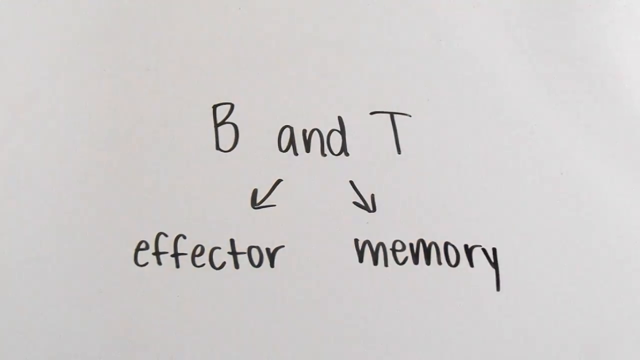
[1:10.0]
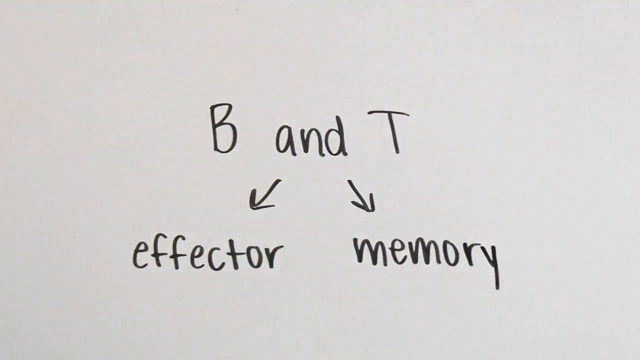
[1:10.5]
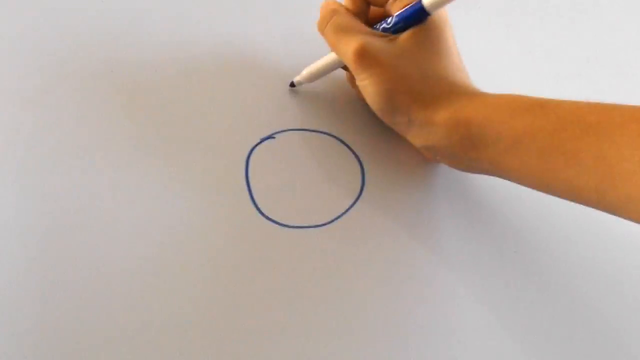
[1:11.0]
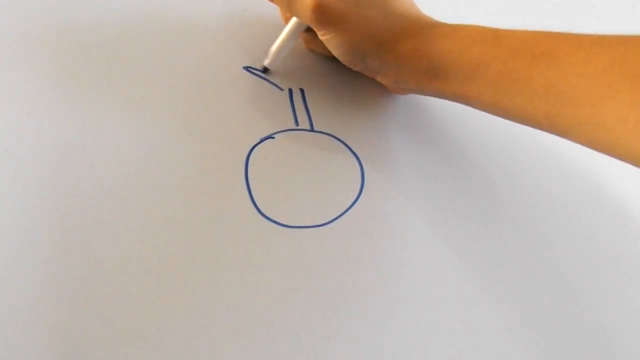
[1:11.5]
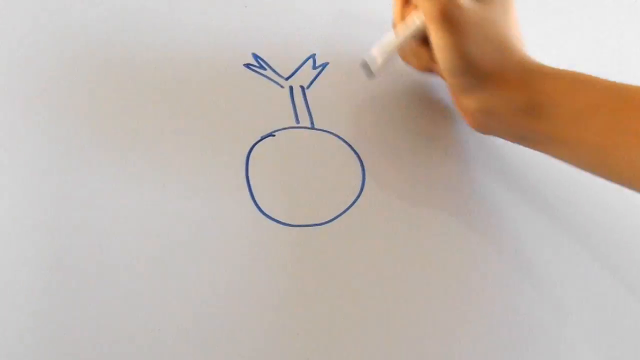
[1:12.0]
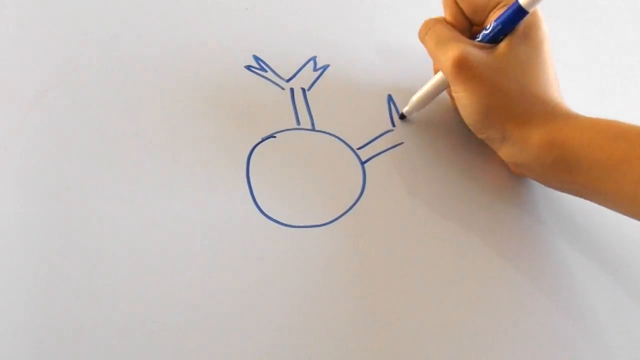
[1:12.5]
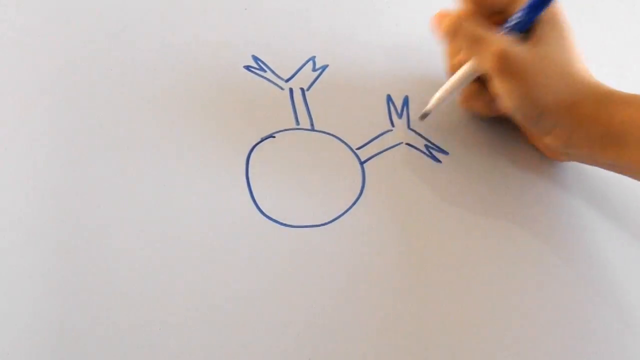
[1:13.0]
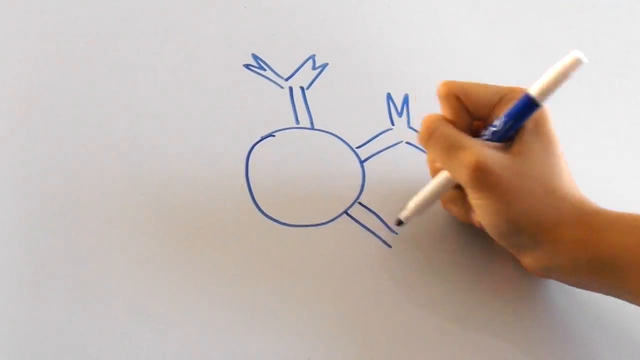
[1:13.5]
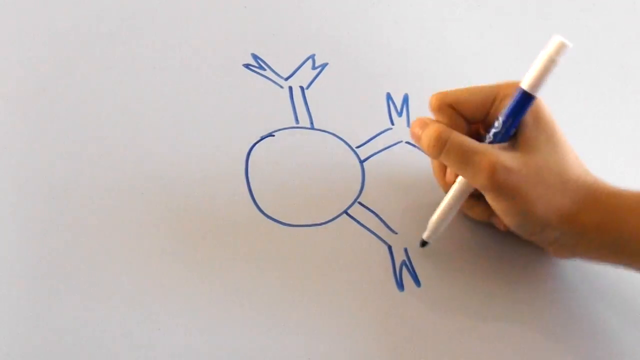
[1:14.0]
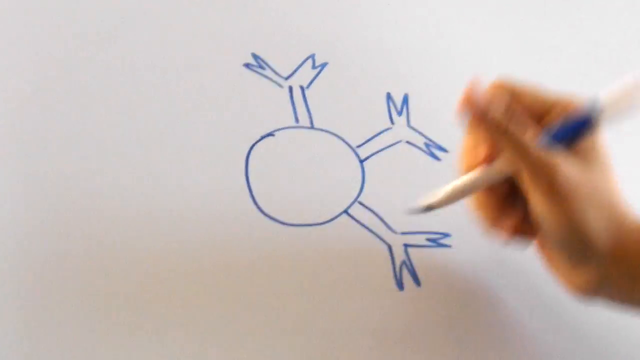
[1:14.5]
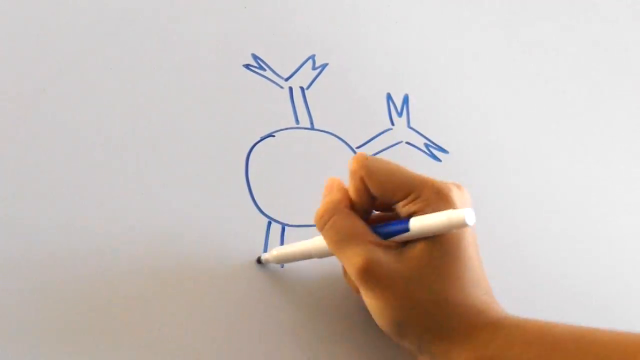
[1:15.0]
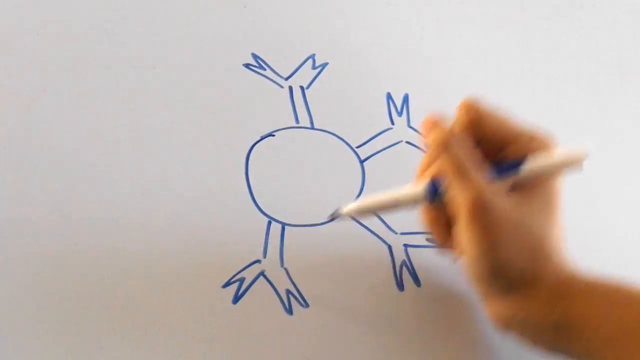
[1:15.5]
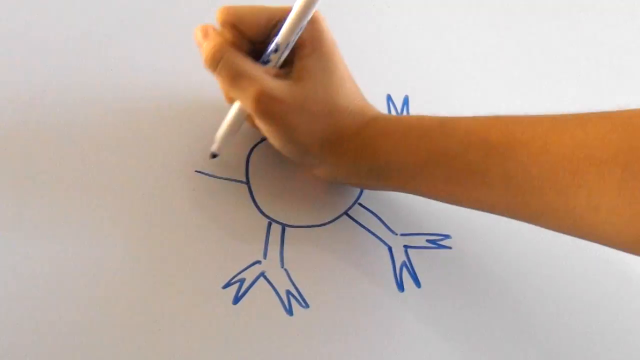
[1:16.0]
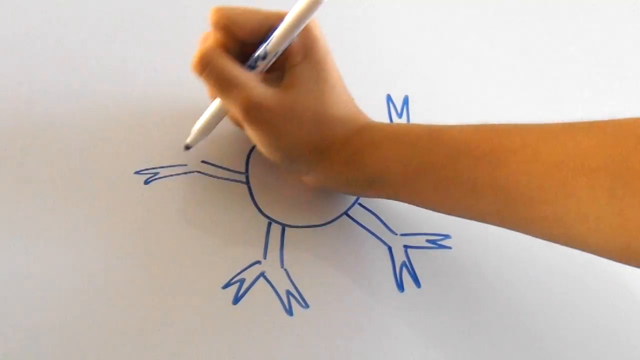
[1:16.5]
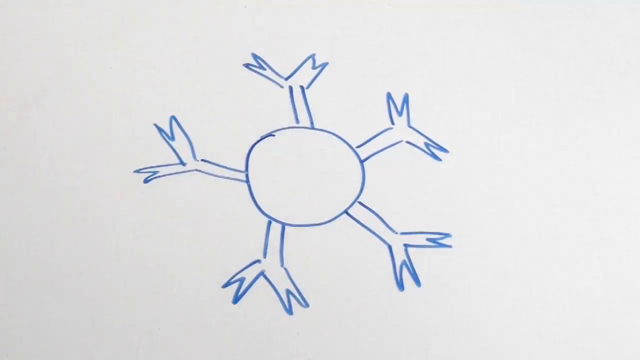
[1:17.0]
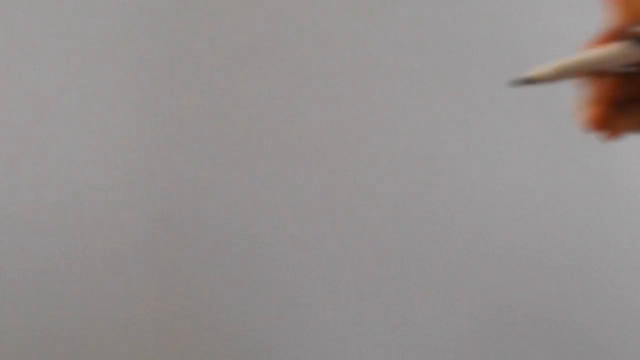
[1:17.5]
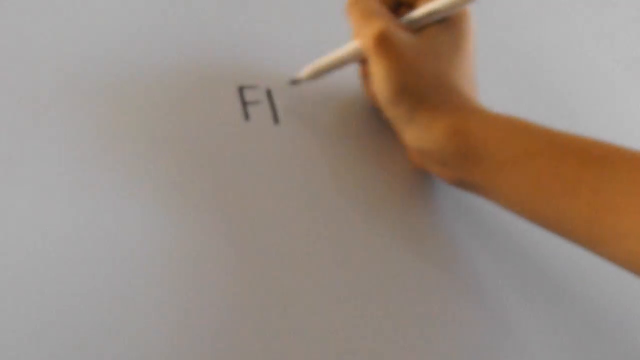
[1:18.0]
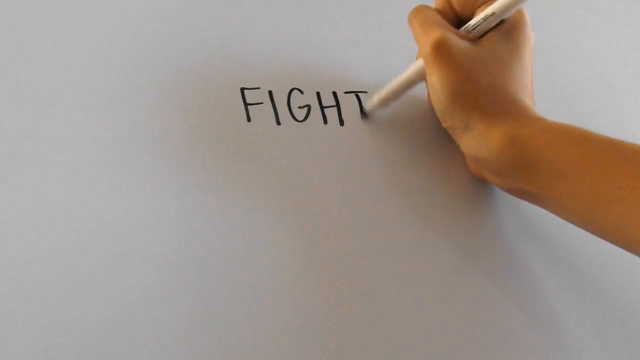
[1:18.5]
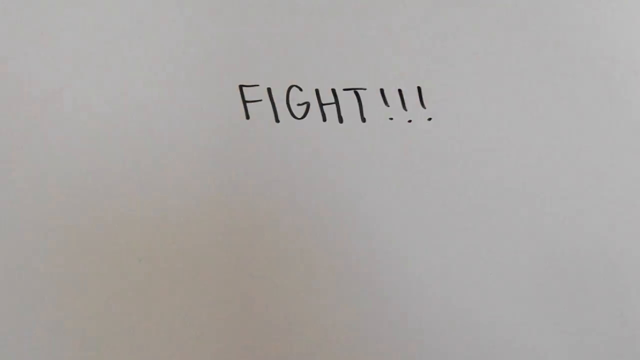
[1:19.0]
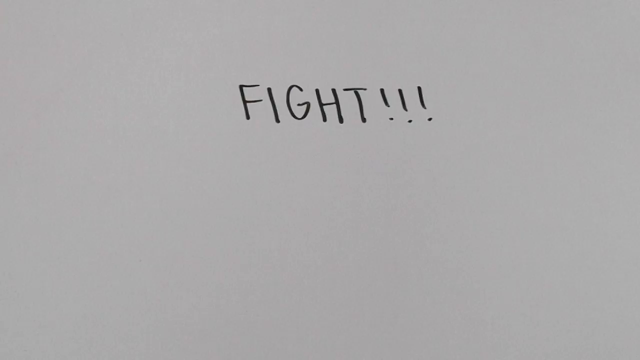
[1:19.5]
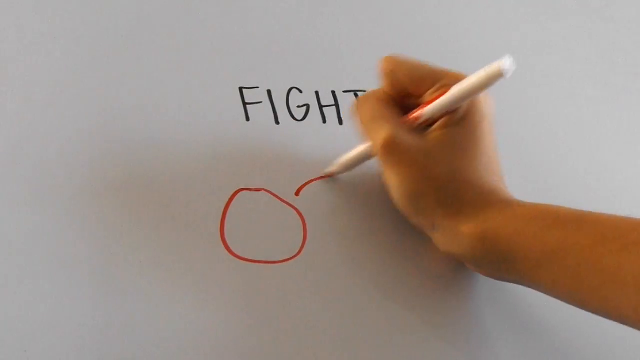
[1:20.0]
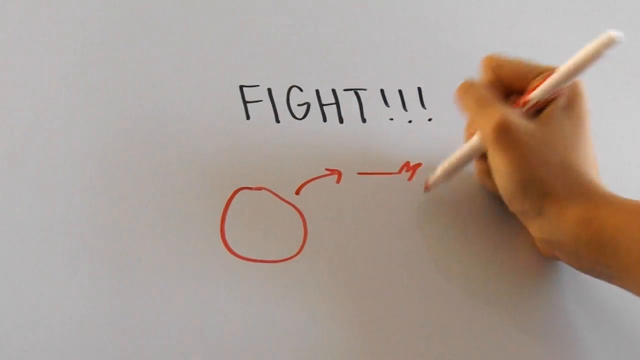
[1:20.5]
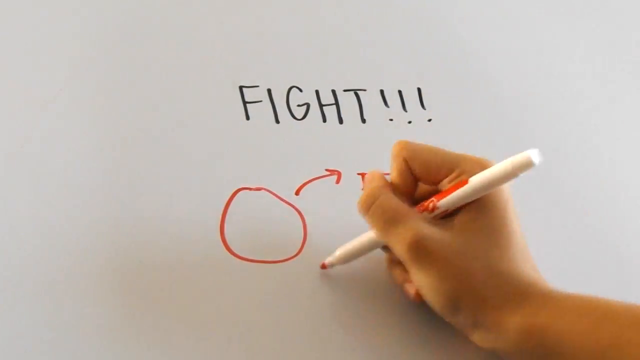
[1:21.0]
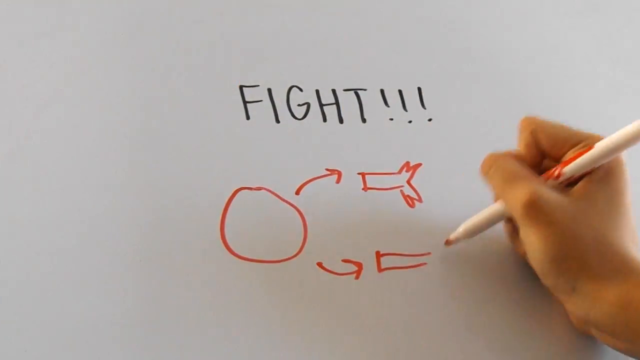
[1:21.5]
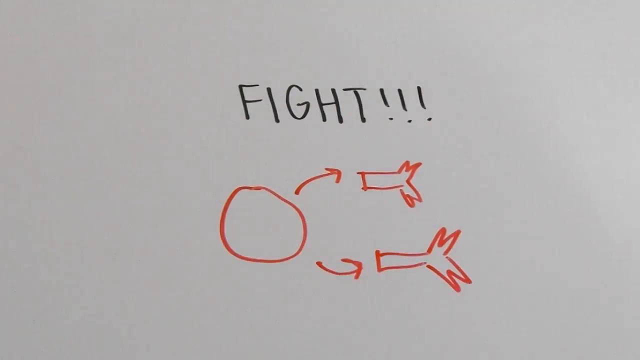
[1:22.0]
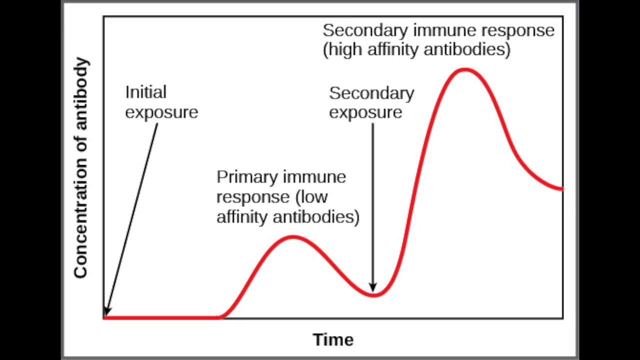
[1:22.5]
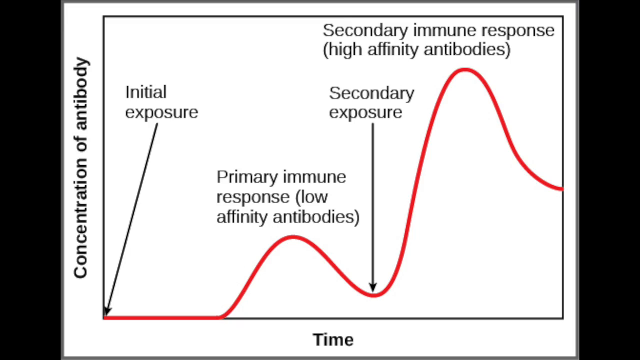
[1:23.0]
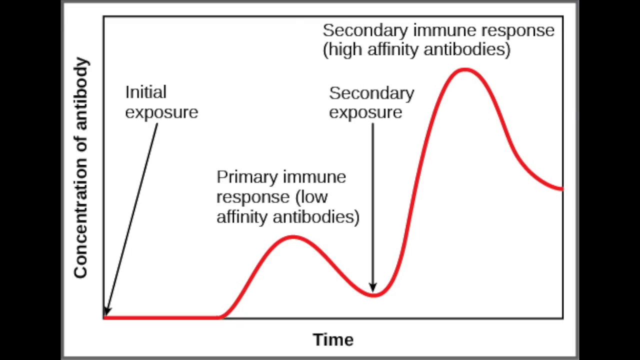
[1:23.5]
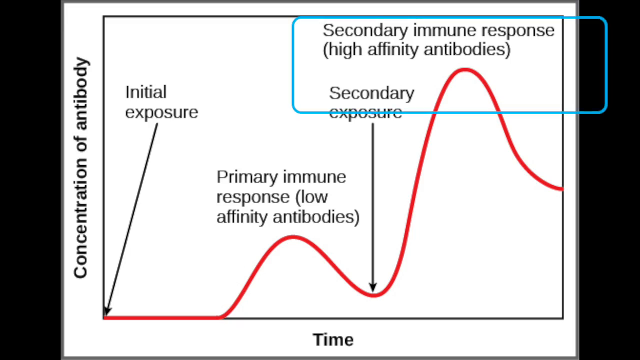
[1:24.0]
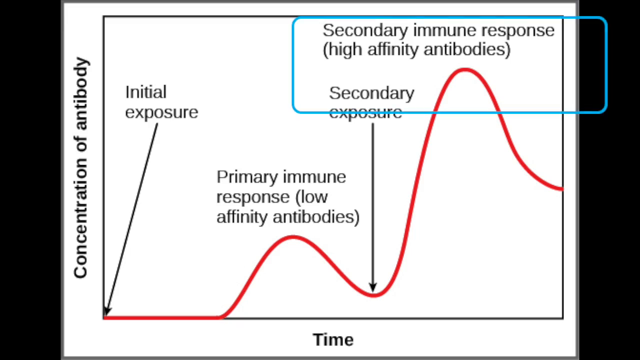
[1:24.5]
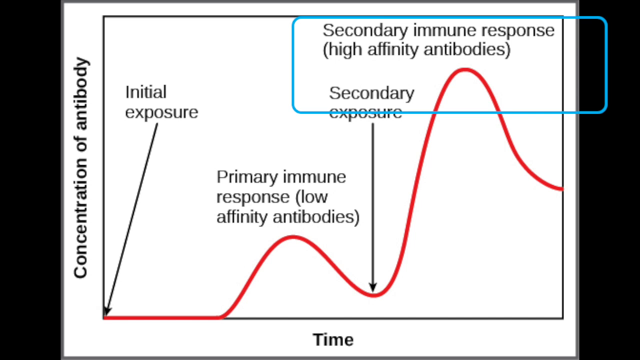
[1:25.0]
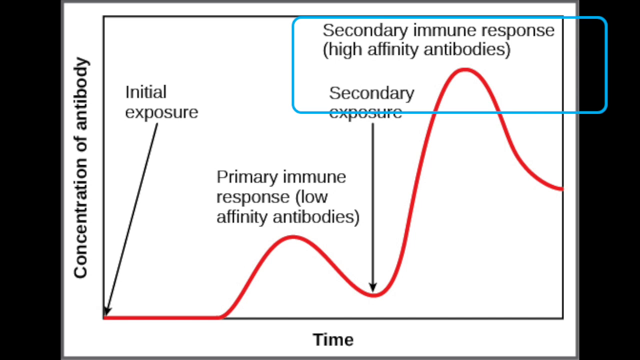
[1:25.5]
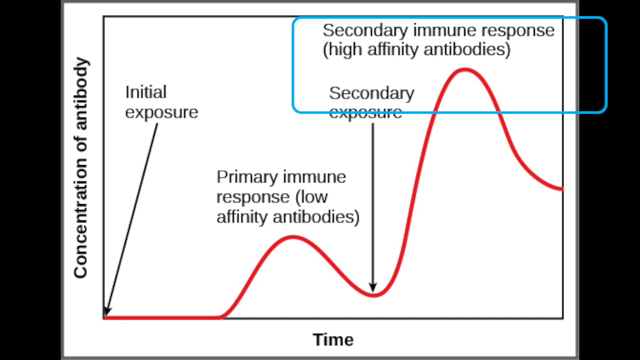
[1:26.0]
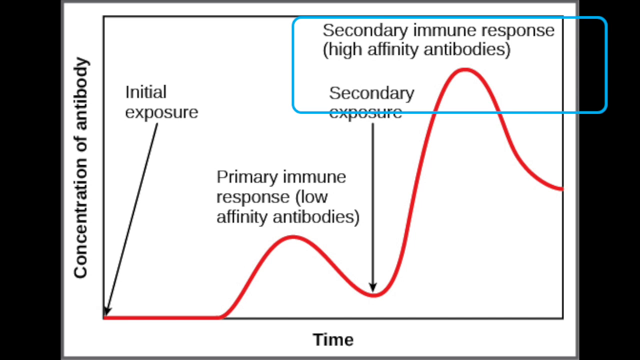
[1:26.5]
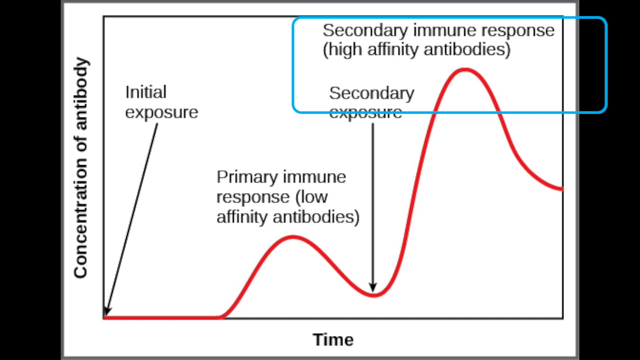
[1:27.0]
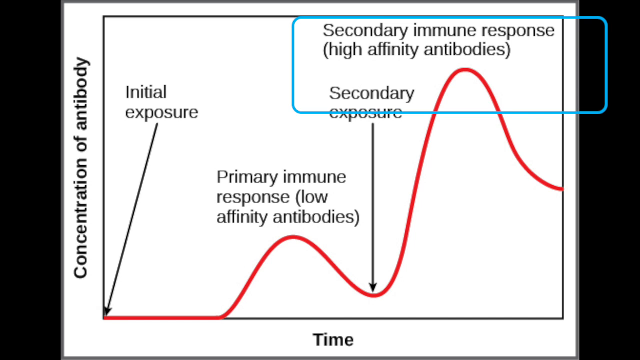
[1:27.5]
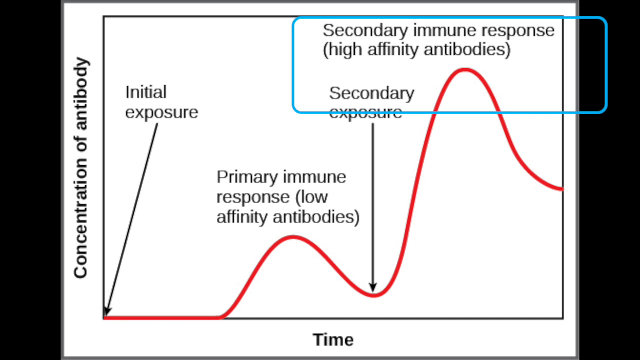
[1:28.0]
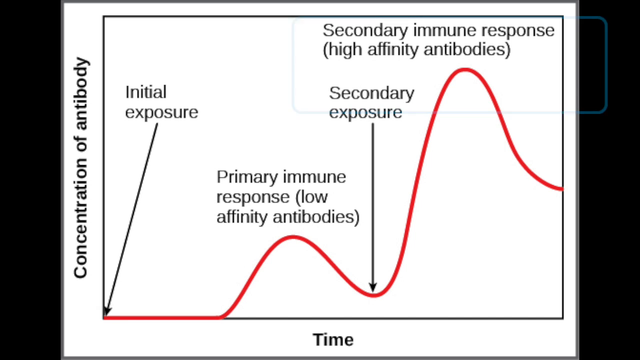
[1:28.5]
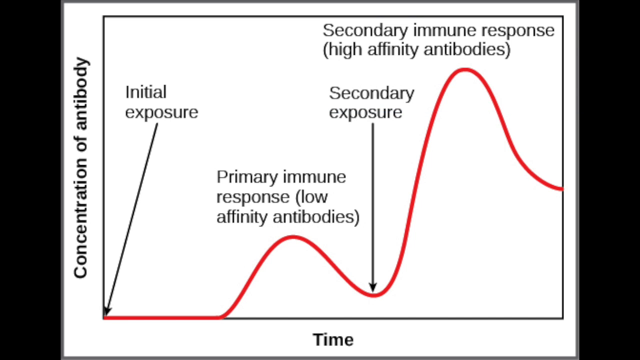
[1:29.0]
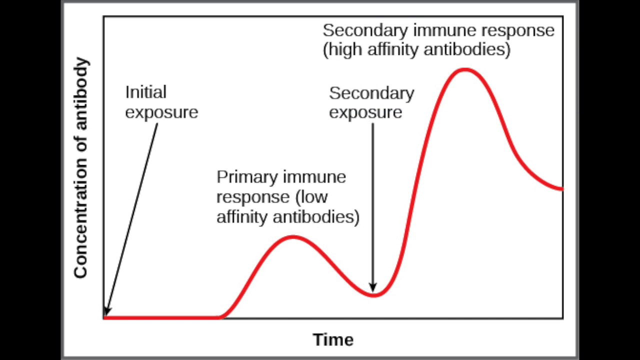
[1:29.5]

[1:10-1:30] The screen shows "B and T" in black: the capital B is just above the middle line of the screen, "and" is in small caps, and the T is also a capital letter. After a little space, two small arrows are drawn from beneath the letter A and the letter D in "and"; the one under A points slightly toward the bottom left and the one under D slightly toward the bottom right. Under the left-pointing arrow is the word "Effector", and under the right-pointing arrow the word "Memory". That disappears and the hand returns with the blue marker. It draws a circle in the middle, then at the top of the circle two straight lines about four centimeters long, then what looks like the bottom of a ribbon, the sharp V-like point, extending from the top of the two lines to the left and to the right, like two ribbon points. The hand repeats this motif five times, first to the right of the initial one and then again and again, until the drawing resembles a snowflake. The shot cuts away and the hand writes "FIGHT!!!" in black capital letters with three exclamation marks. It then comes in with a red pen and draws a red circle to the left, just below the F and the I, then a short arrow, maybe three centimeters and a little bent, to the top right, and another arrow to the bottom right of the circle; both arrows point to the ribbon ends.